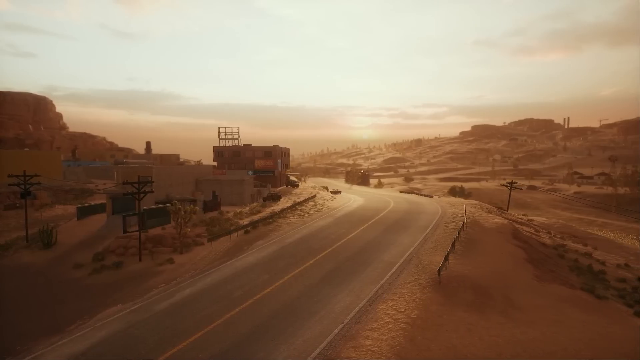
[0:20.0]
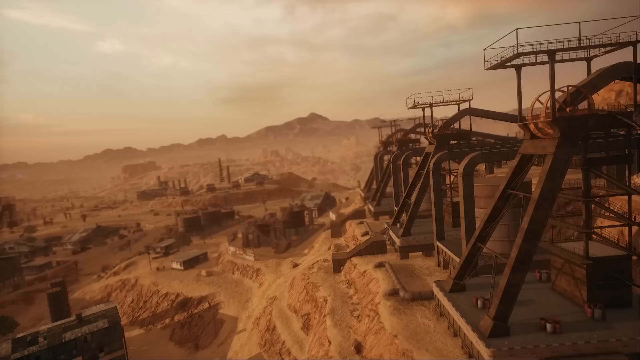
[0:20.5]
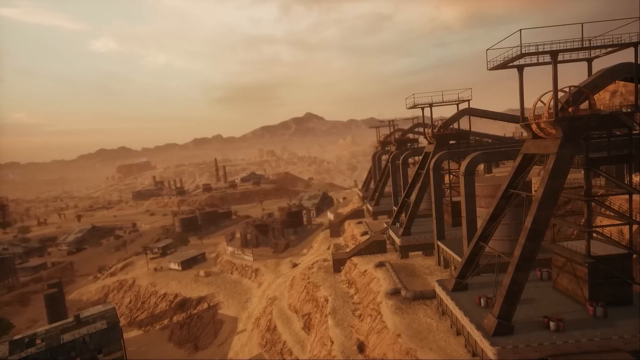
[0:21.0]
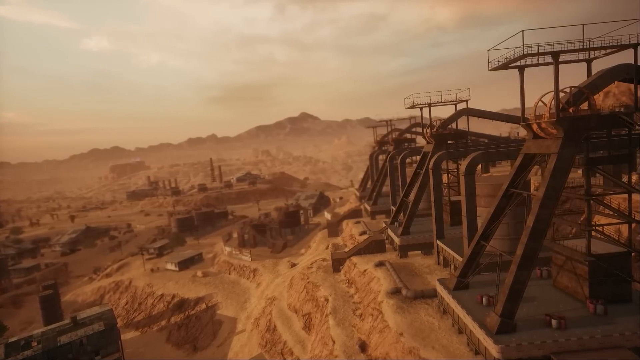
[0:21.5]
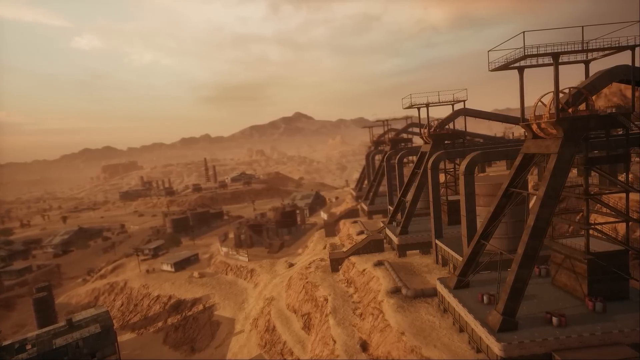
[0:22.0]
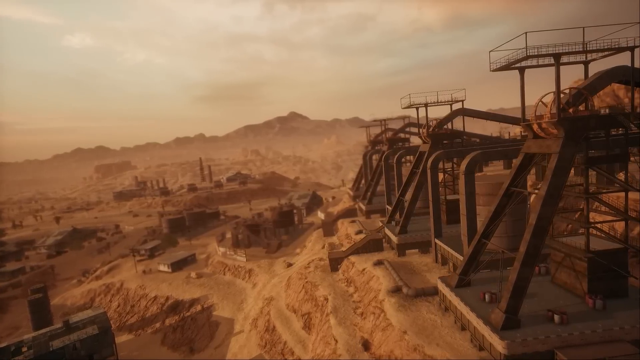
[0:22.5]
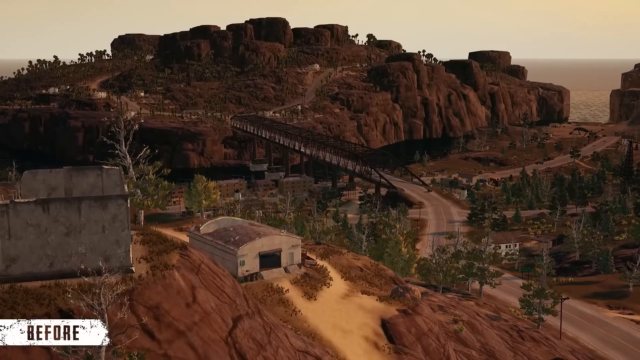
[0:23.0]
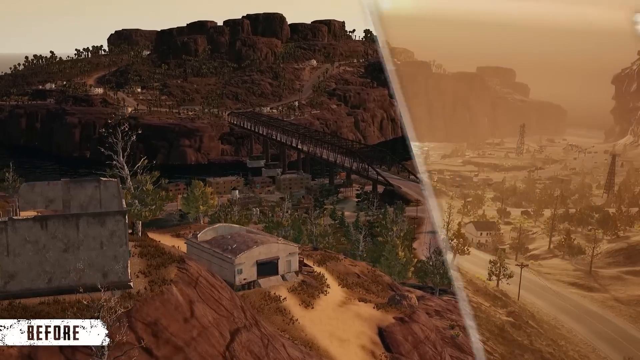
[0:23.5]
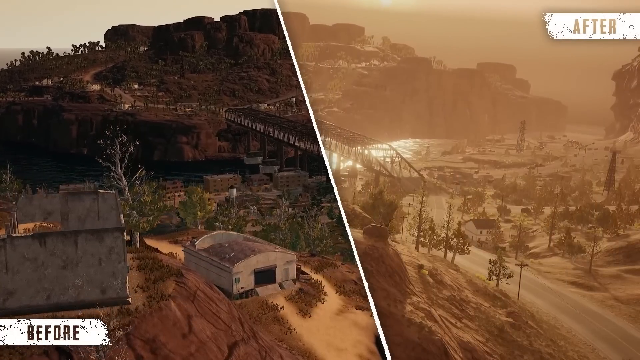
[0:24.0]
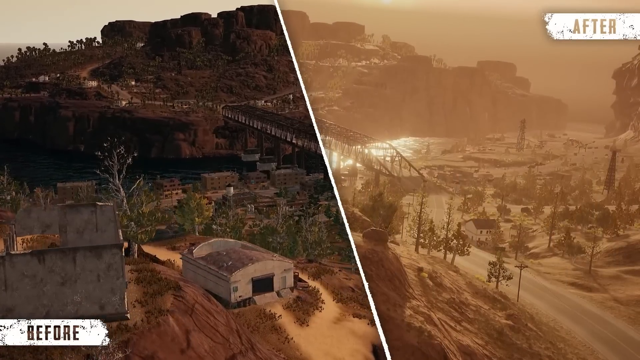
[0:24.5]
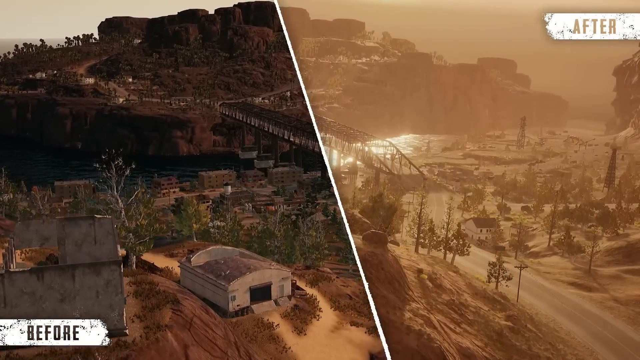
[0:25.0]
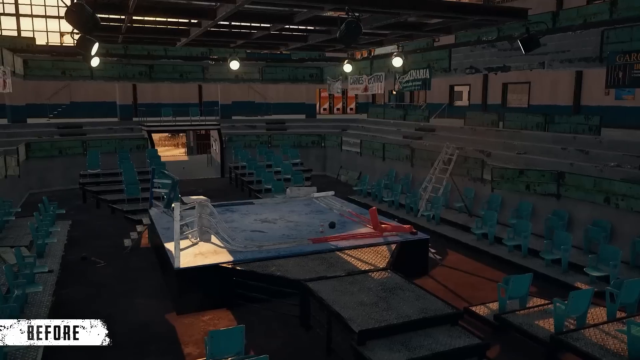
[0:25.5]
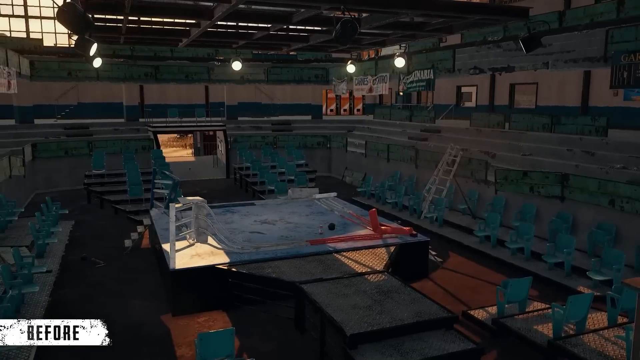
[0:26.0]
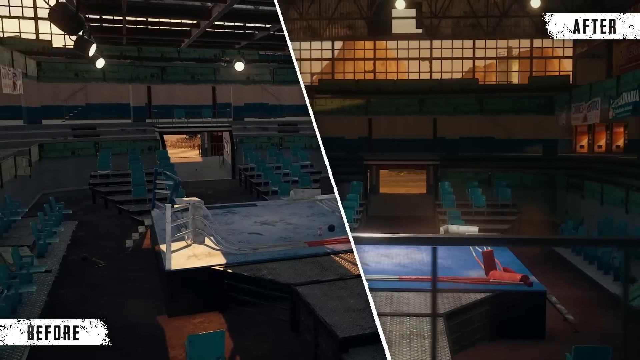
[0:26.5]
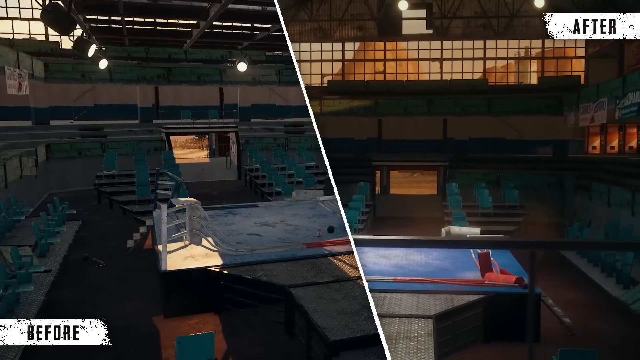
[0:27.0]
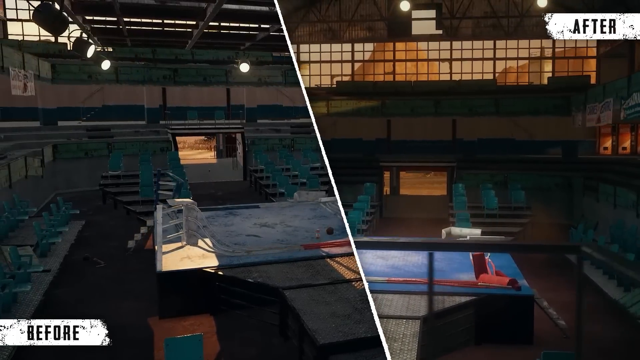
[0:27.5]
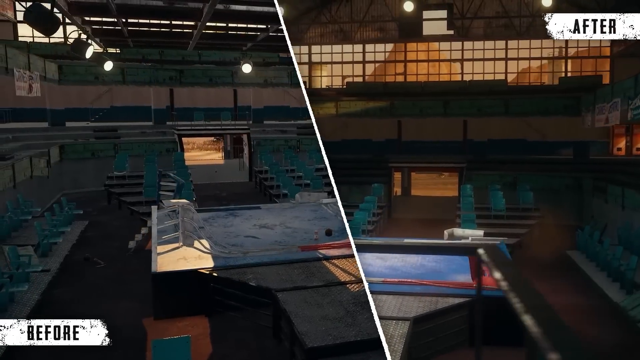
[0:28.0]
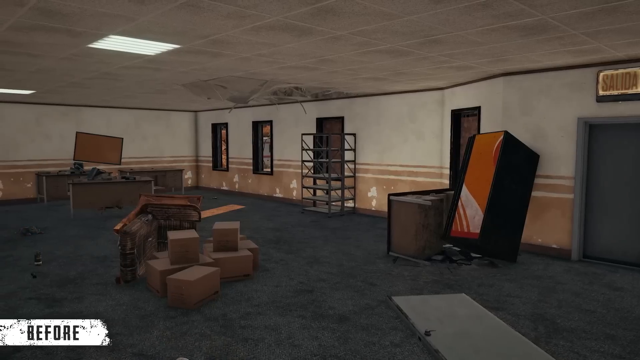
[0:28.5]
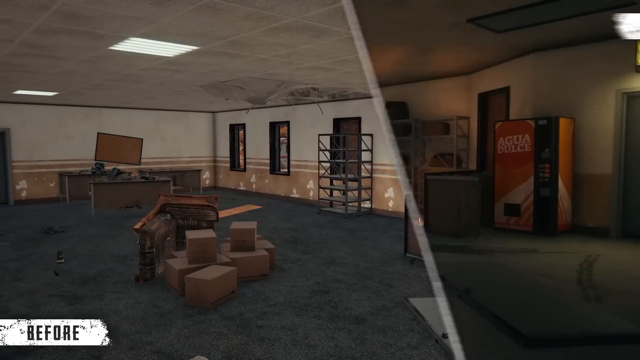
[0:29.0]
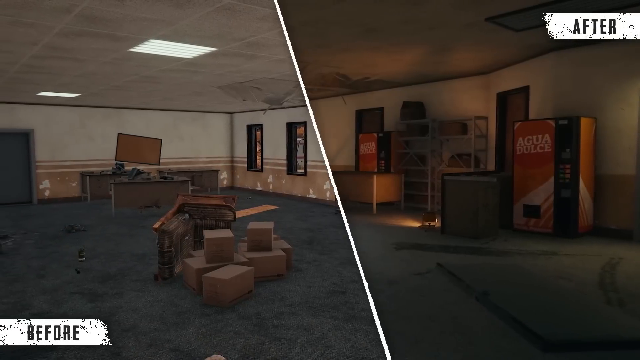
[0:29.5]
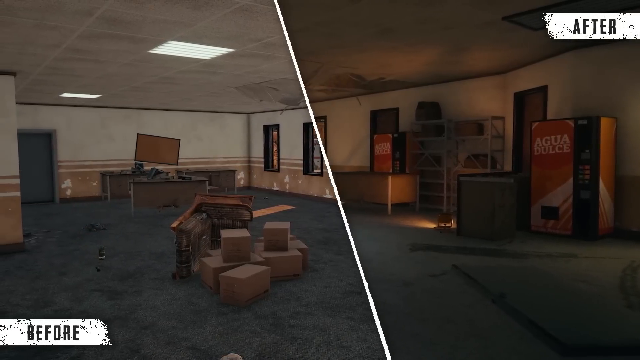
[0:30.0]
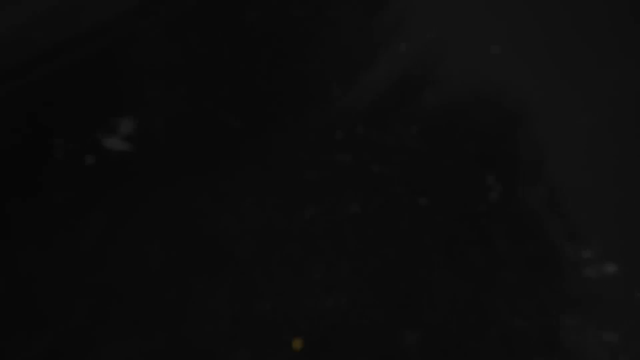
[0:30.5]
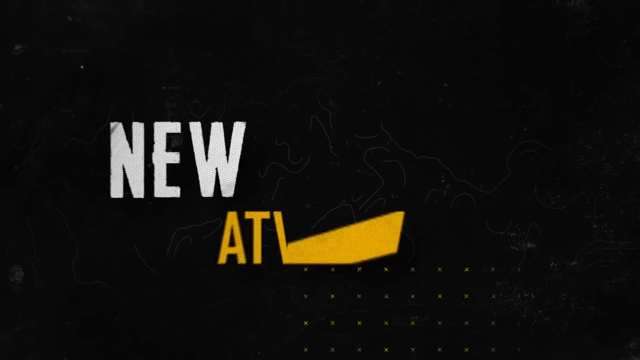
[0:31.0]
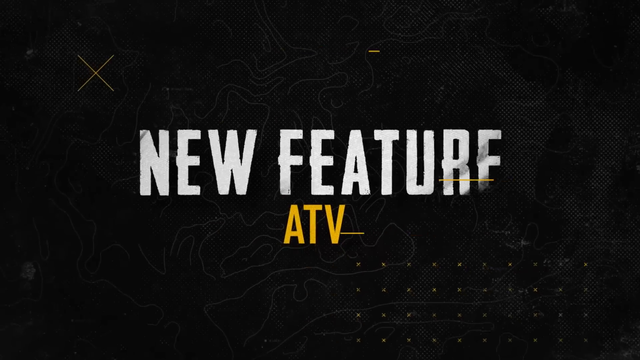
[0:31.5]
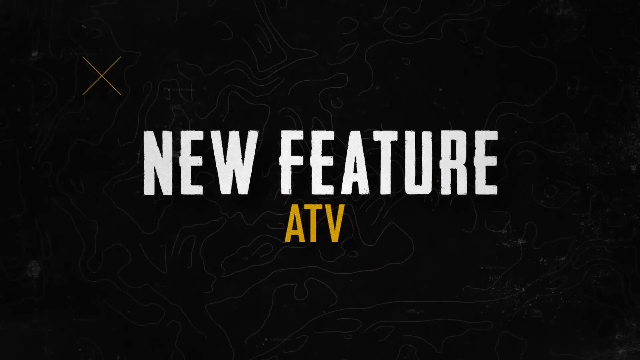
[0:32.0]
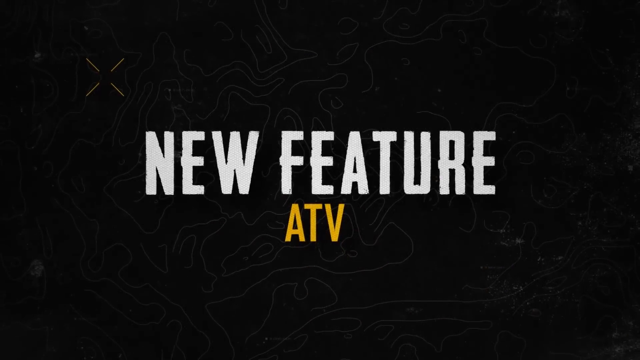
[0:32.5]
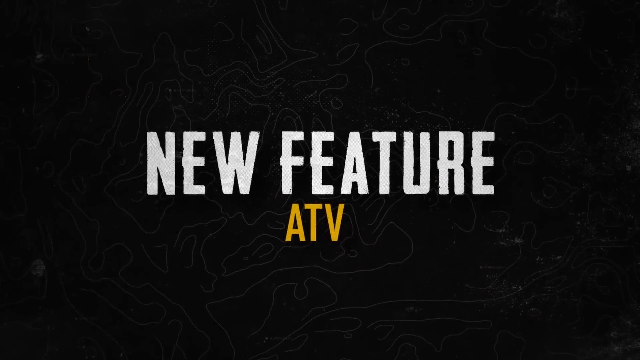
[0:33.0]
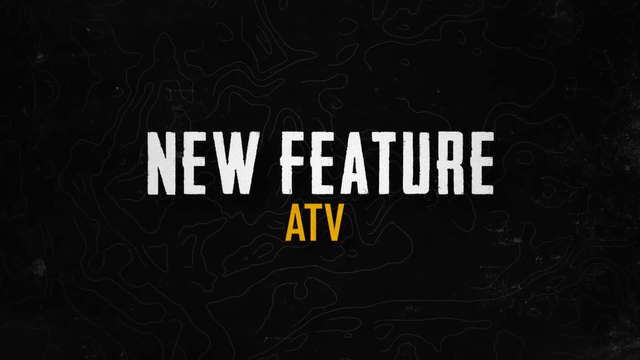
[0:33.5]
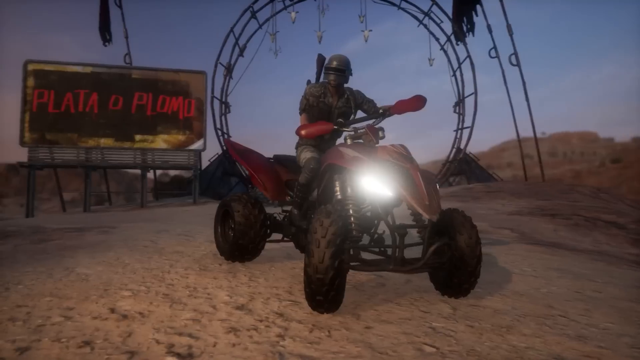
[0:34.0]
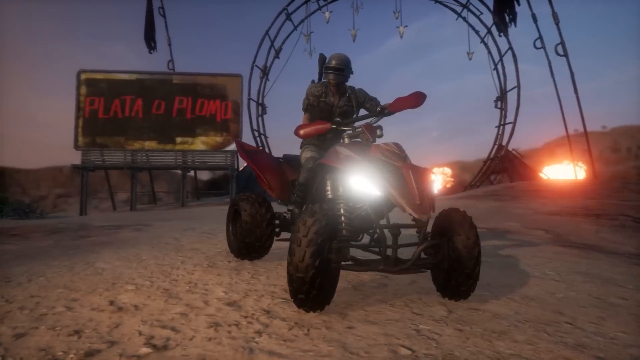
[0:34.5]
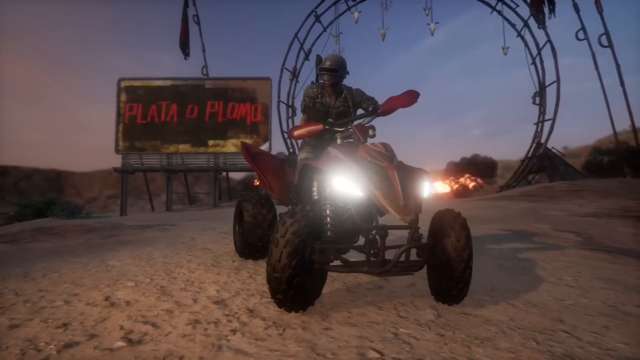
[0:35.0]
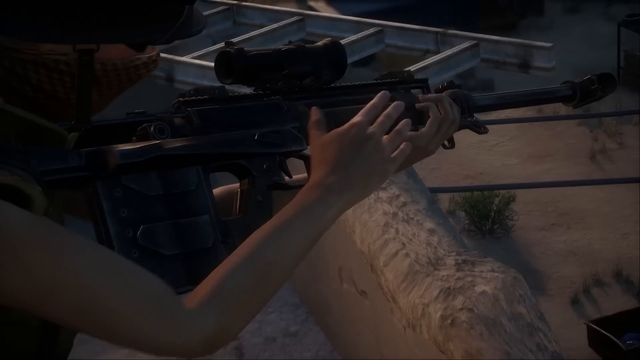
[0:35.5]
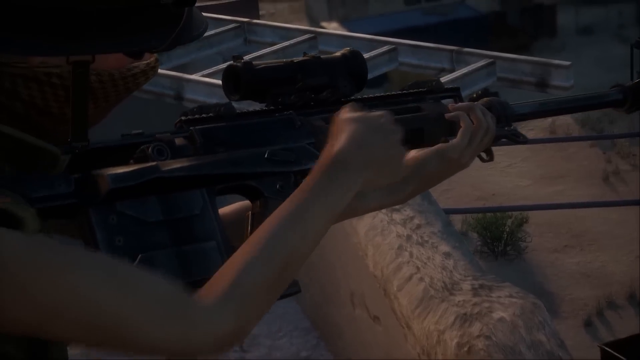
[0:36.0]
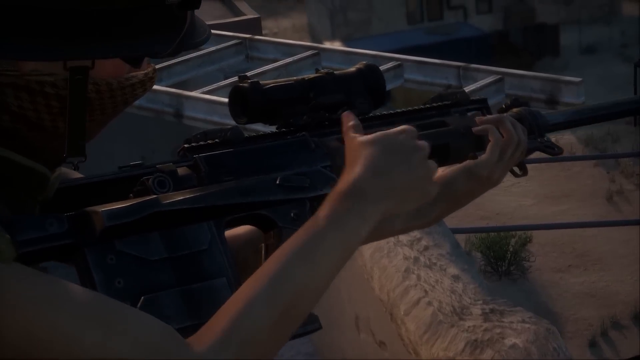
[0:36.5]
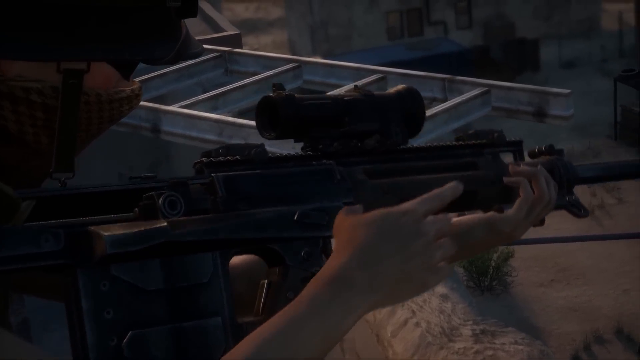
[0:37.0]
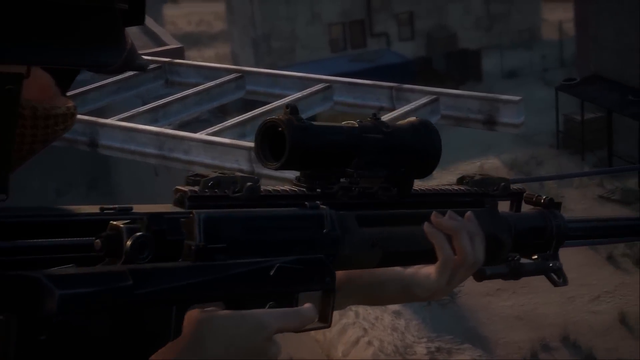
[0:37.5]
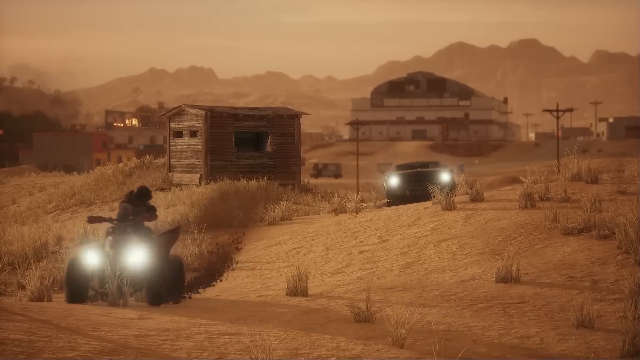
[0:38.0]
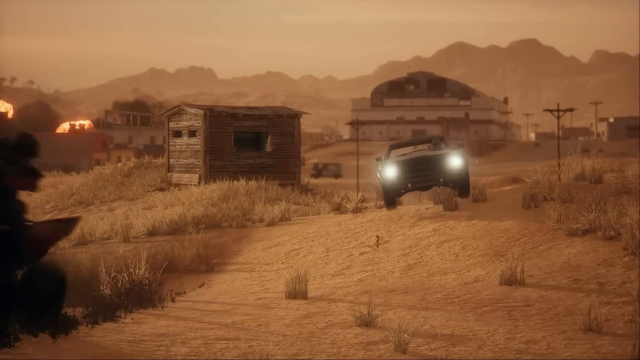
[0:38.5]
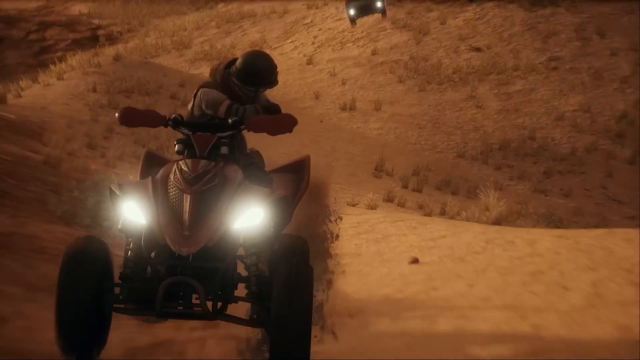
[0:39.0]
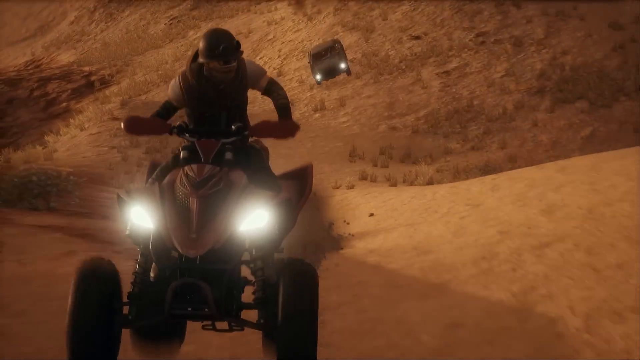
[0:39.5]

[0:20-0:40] Various shots of the map are shown, and then the view focuses on one part of the map with an aeroplane hangar of some kind and a mountainous area in the background. A line runs vertically down the middle of the screen at an angle. The left side shows the original footage, while the right side shows the same area looking different, with a white text box in the top right that says "after", apparently comparing how the area looks after the update with how it used to look. This area seems to have had a lot more fog added, and it reacts more when the sun is out. The same comparison is done inside an airport hangar, where the difference is harder to see but the image looks a bit sharper. It is done again in an office area, where the after side has a darker-looking lighting effect. After these three comparisons, a black screen shows "new feature" in big white letters and, underneath in yellow, "ATV". A quad bike appears with someone sitting on it, and the camera pans around it from the left of the quad bike to the right, with some fire visible in the background. Next, the view shows the right side of a man holding a rifle of some kind as he changes his ammo.